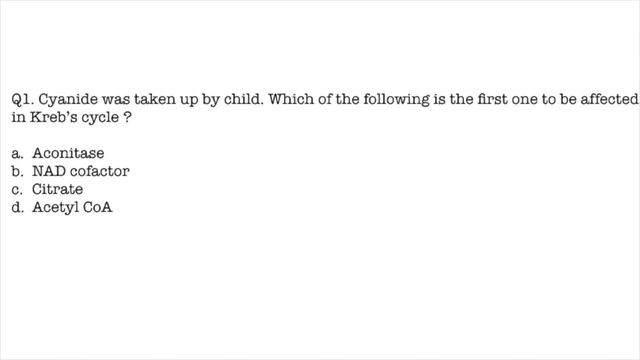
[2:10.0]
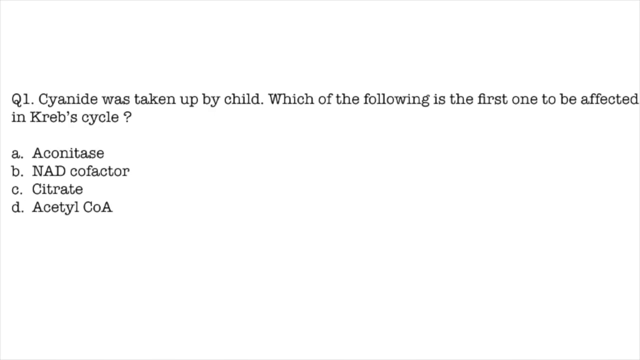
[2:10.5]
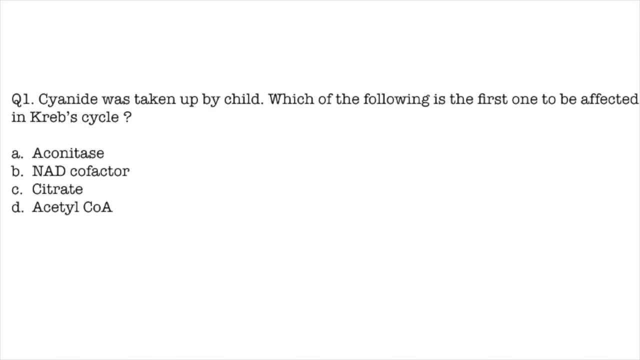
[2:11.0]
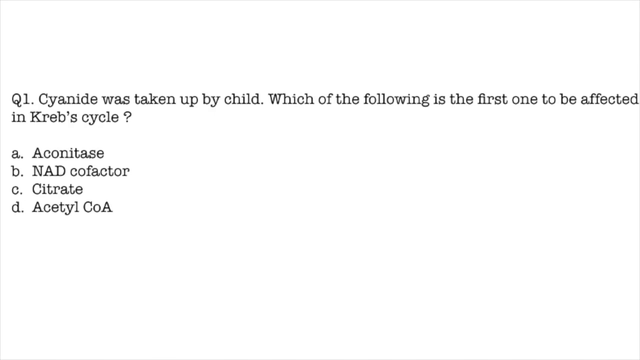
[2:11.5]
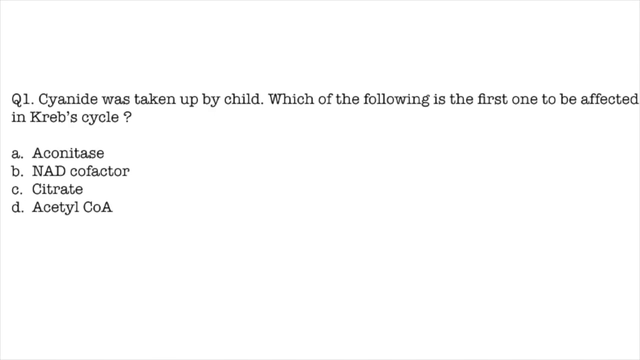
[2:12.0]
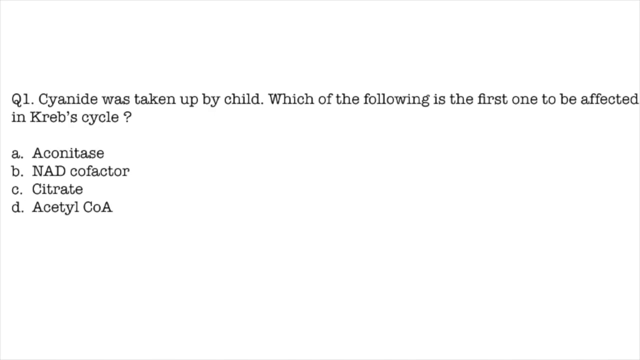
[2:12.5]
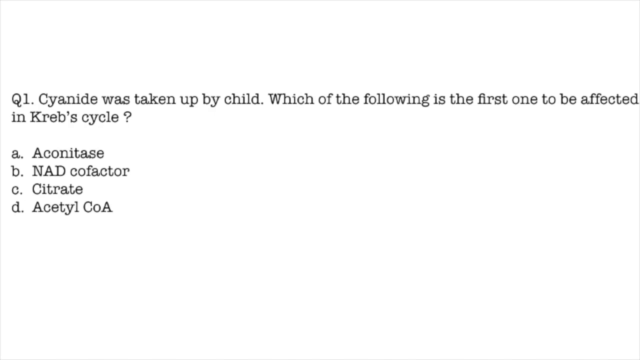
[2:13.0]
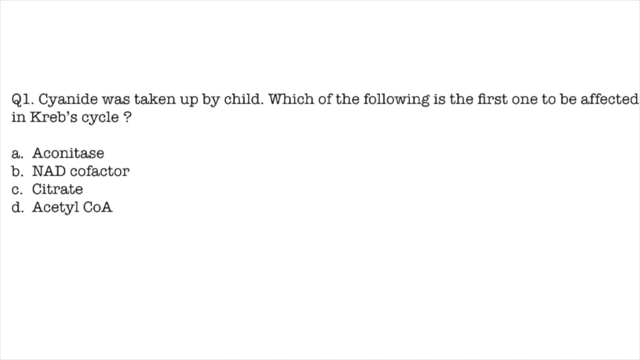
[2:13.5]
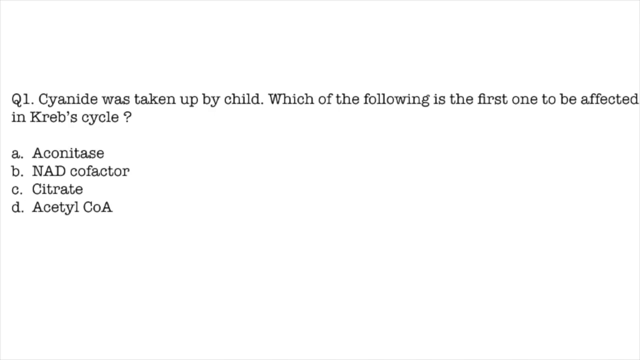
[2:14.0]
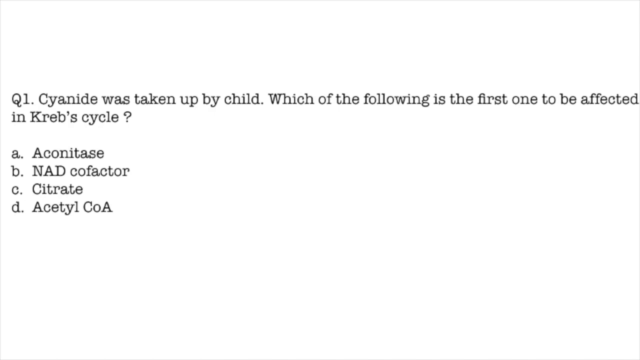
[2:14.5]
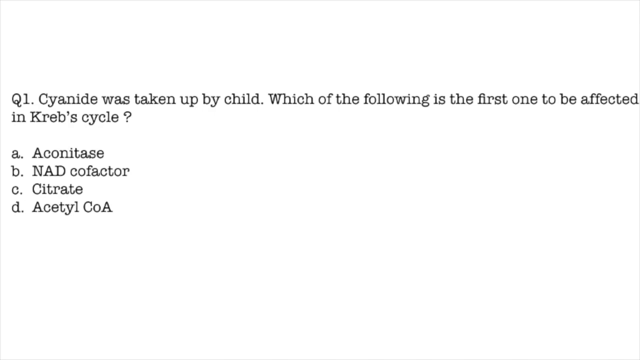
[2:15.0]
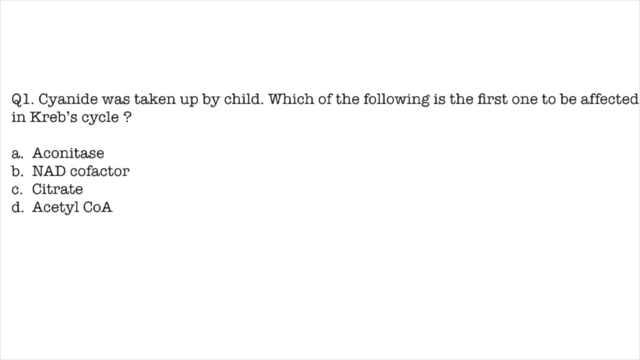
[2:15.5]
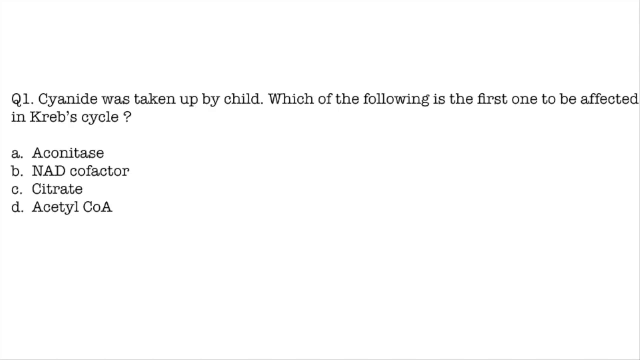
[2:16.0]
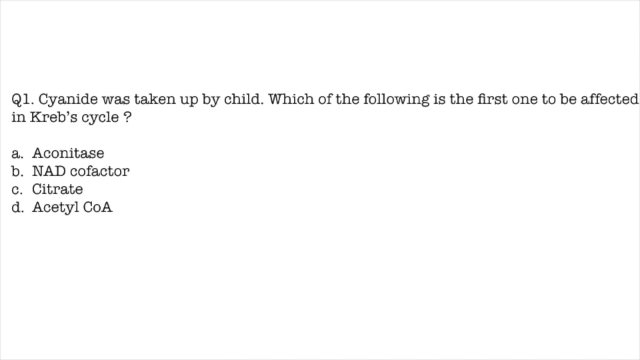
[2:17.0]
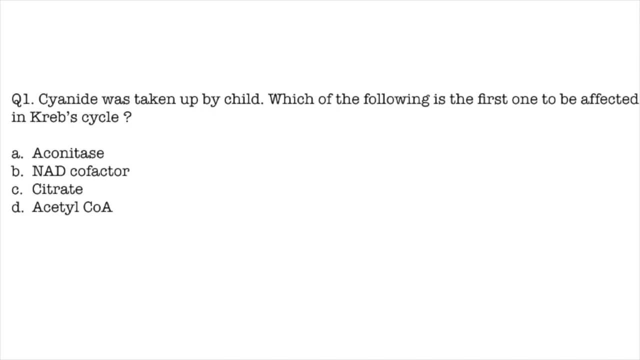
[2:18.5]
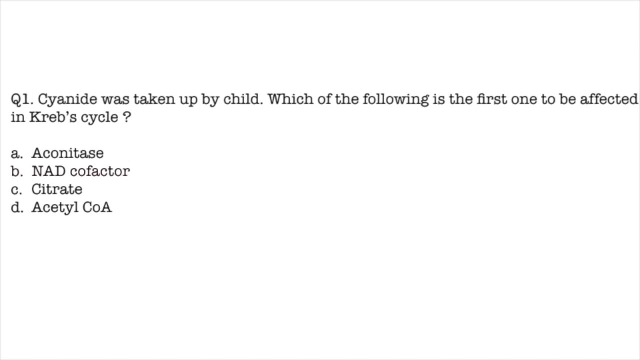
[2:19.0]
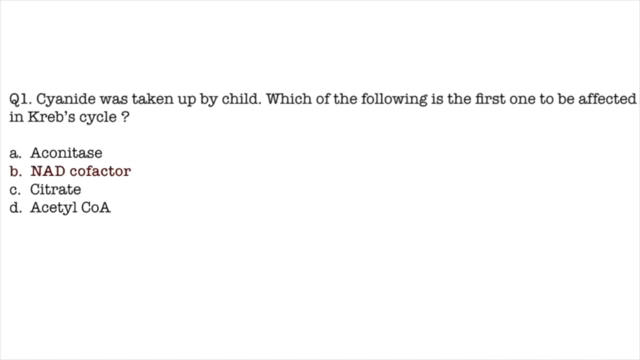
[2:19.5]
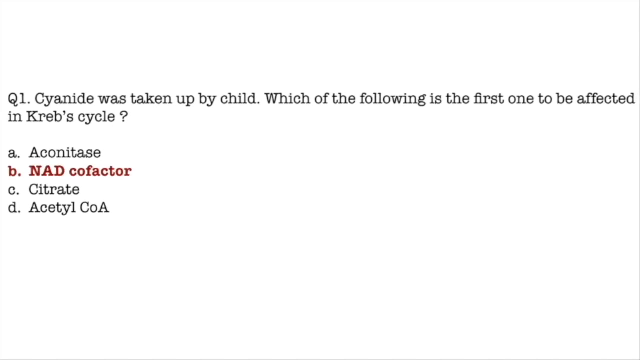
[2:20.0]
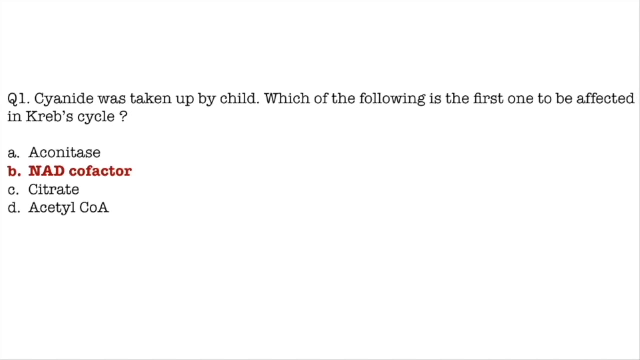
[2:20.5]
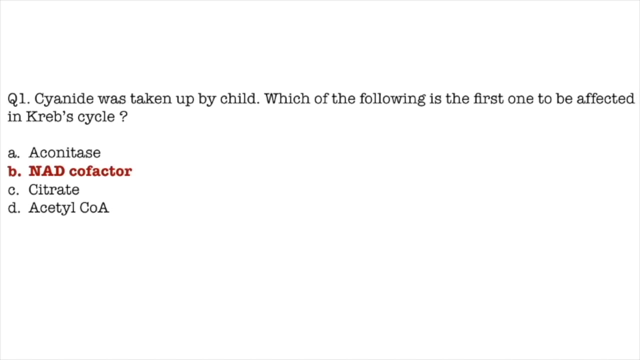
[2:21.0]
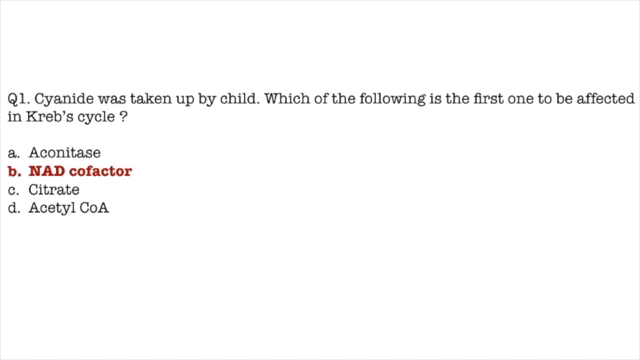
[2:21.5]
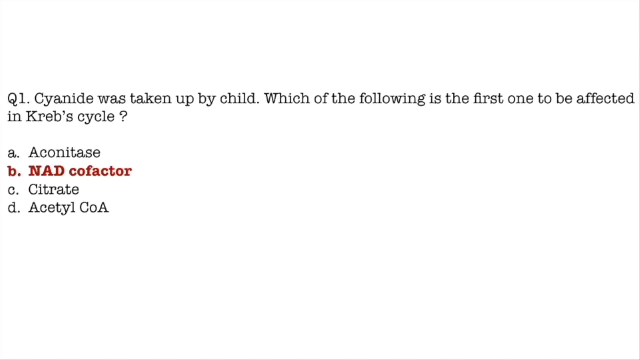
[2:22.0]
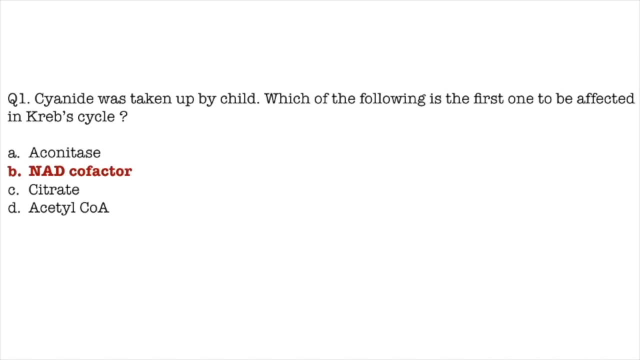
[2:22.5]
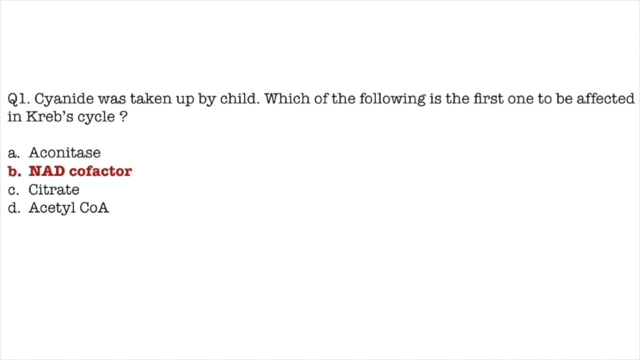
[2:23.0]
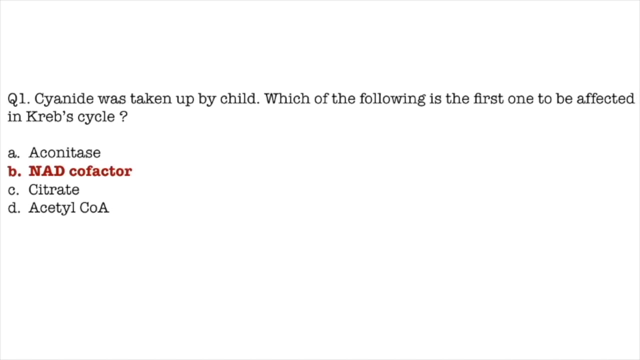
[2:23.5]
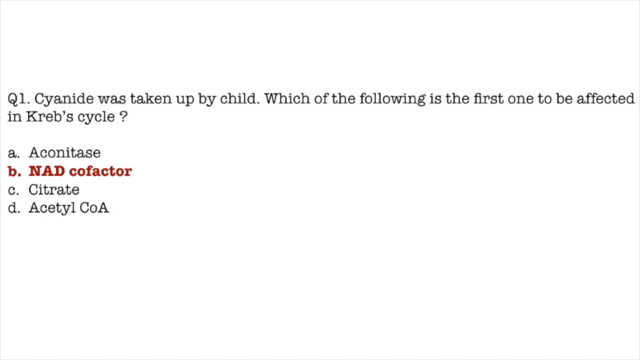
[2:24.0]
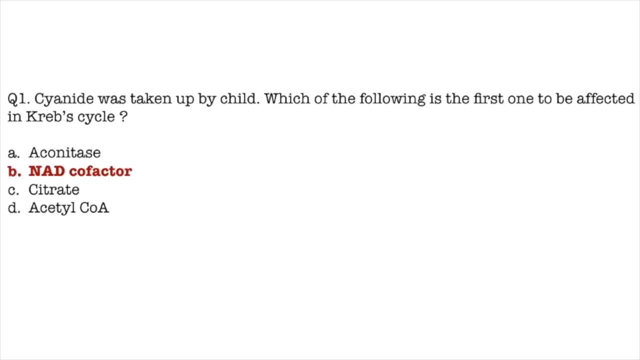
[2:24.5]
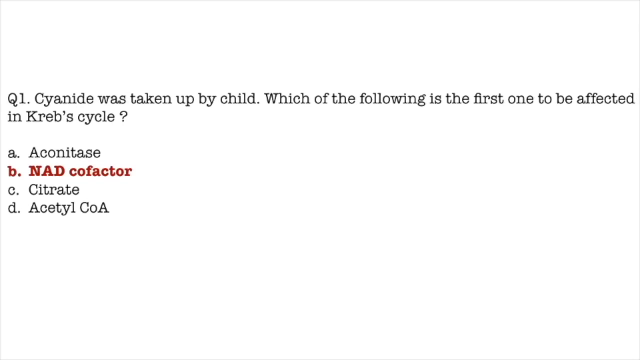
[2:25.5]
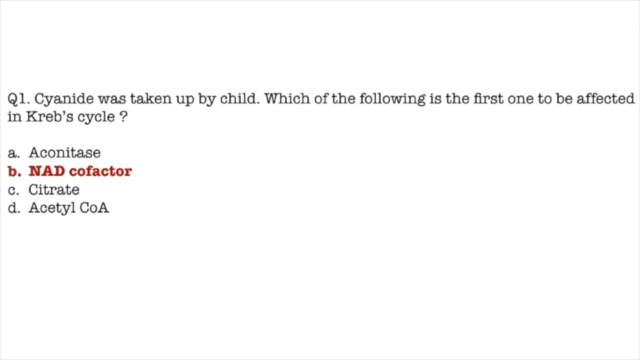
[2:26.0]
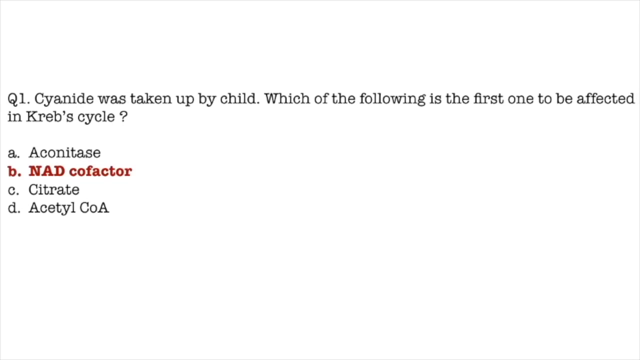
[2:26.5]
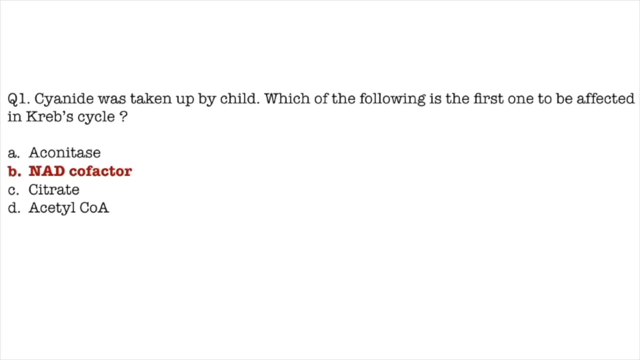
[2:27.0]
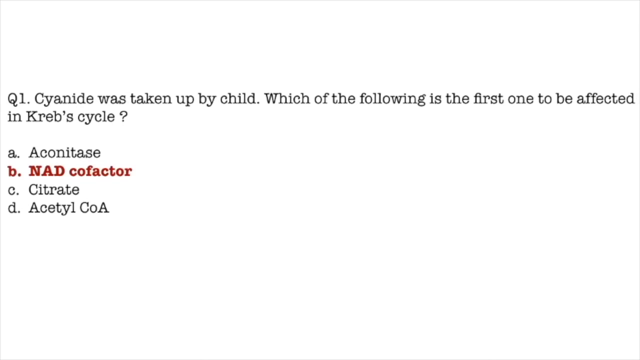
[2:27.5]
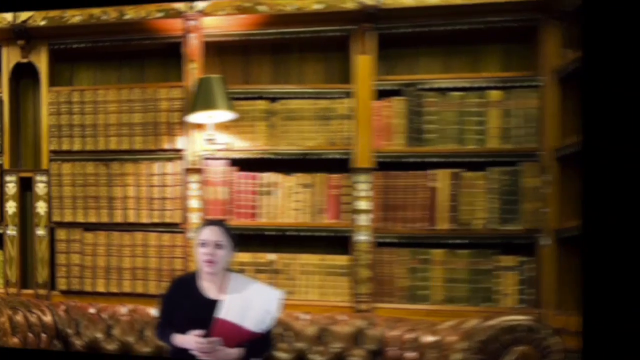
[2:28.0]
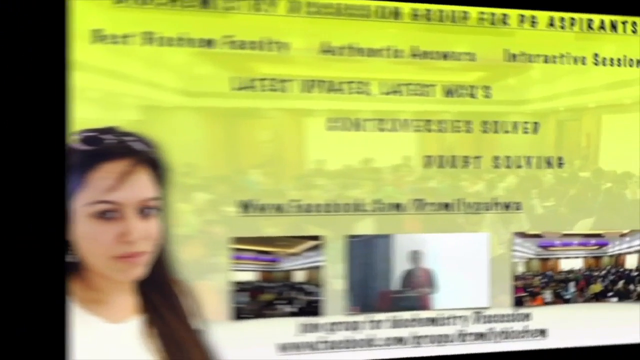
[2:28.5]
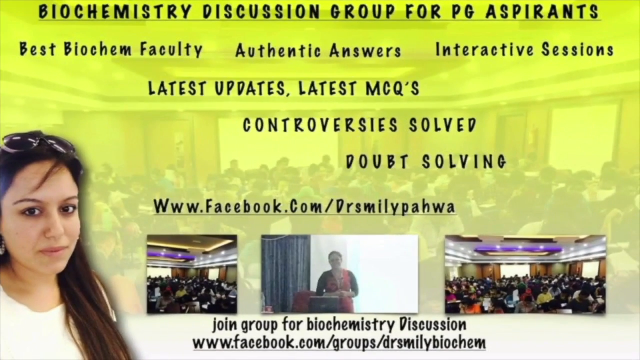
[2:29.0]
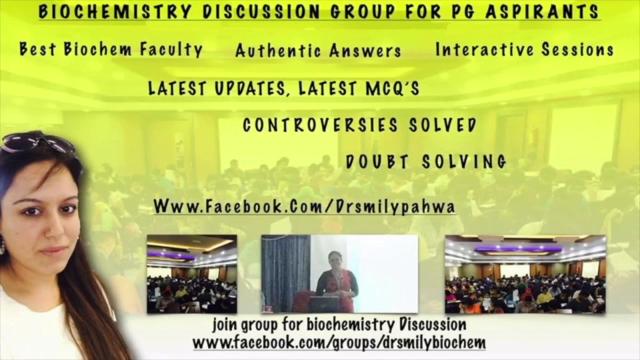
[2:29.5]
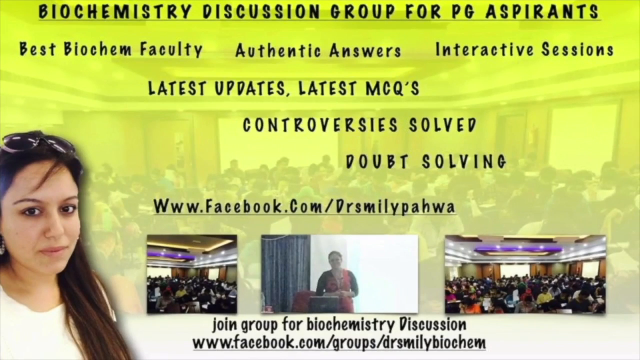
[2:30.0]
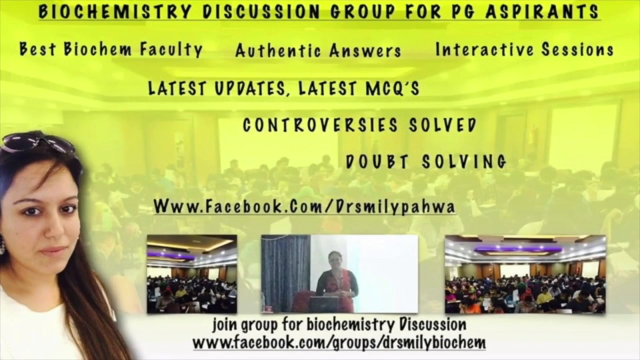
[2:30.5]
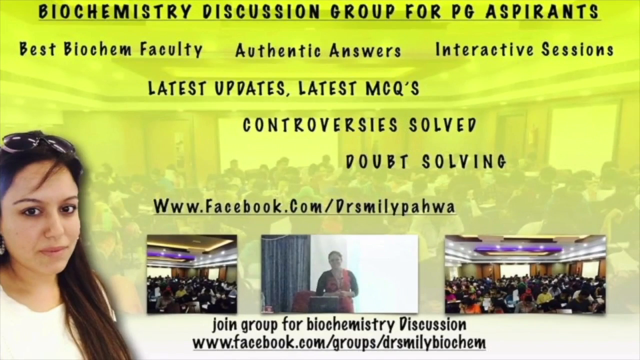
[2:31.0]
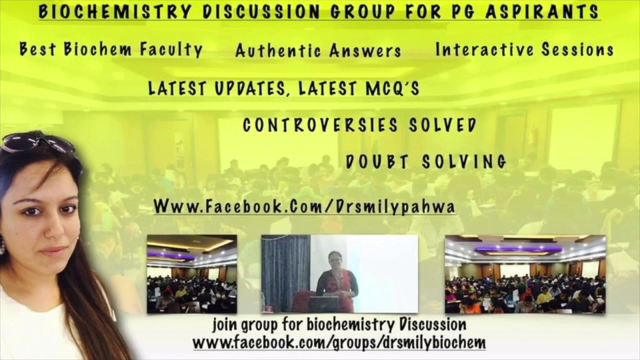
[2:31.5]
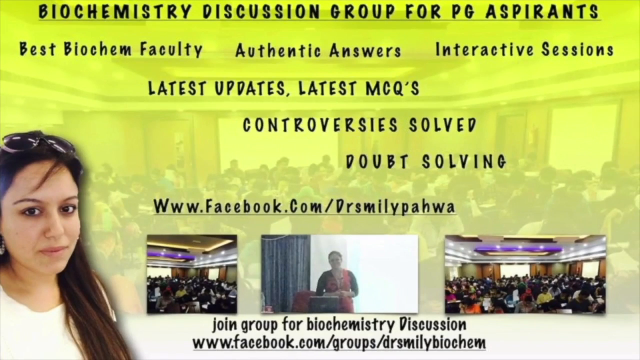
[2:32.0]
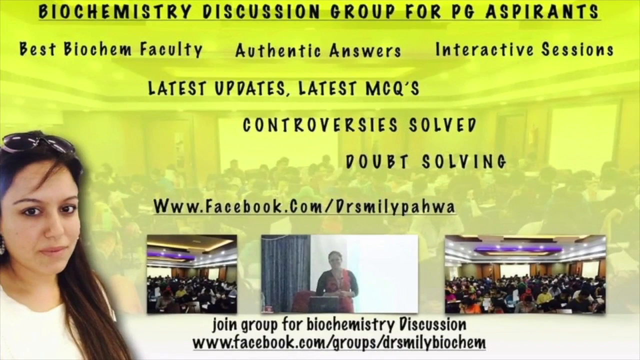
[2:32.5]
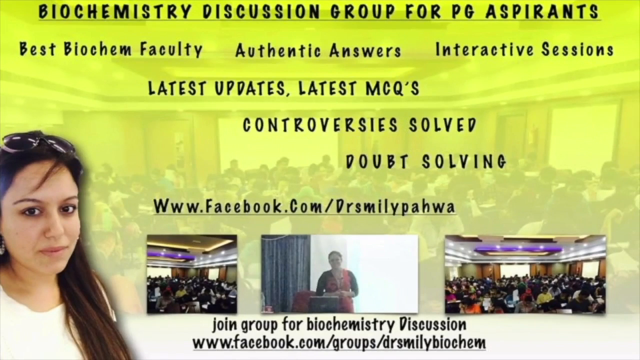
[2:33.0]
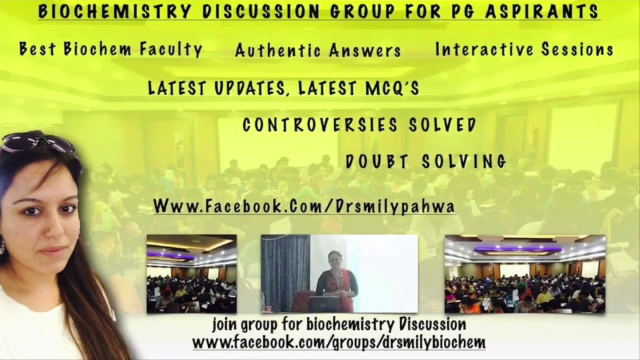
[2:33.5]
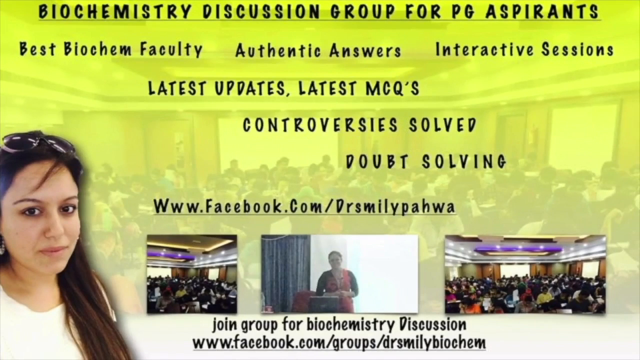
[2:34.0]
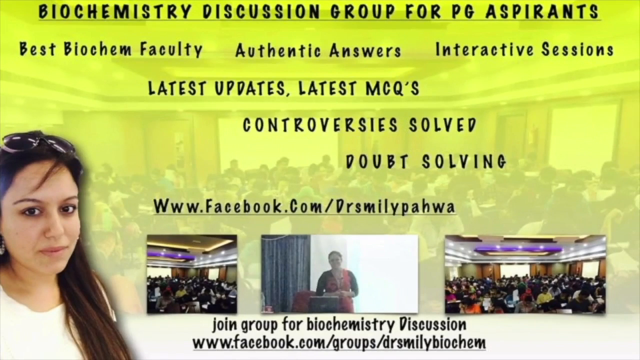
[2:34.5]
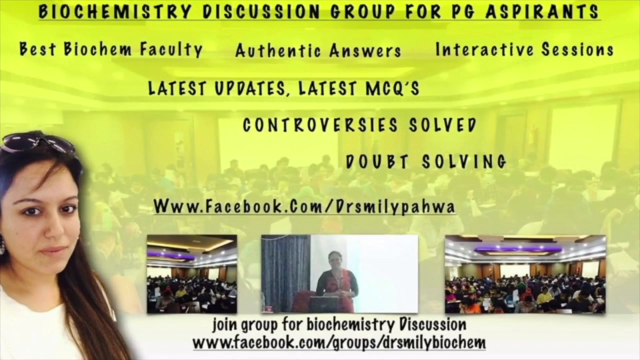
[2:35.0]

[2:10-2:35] Question one appears on the screen, asking about cyanide and what is the first to be affected in the Krebs cycle, with answer A, Aconitase; answer B, NAD cofactor; answer C, citrate; and answer D, acetyl-CoA. Dr. Smiley provides commentary over the video. The screen then changes to a picture of Dr. Smiley standing, positioned on the left, with her sunglasses on top of her head. Across the top of the screen the text reads "Biochemistry Discussion Group for PG Aspirants, Best Biochem Faculty, Authentic Answers, Interactive Sessions, Latest Updates, Latest MCQs, Controversy Solved, Doubt Solved, Join Groups for Biochemistry Discussion", along with a web address for Facebook groups at drsmileybiochem.